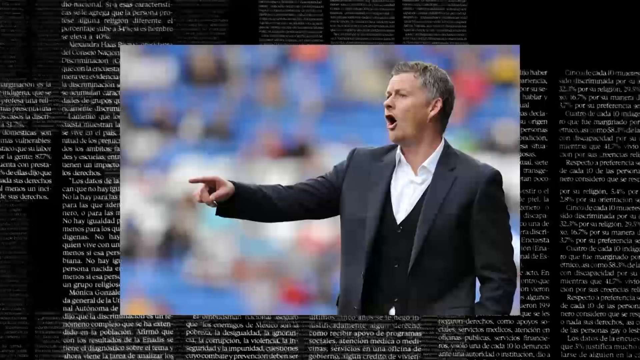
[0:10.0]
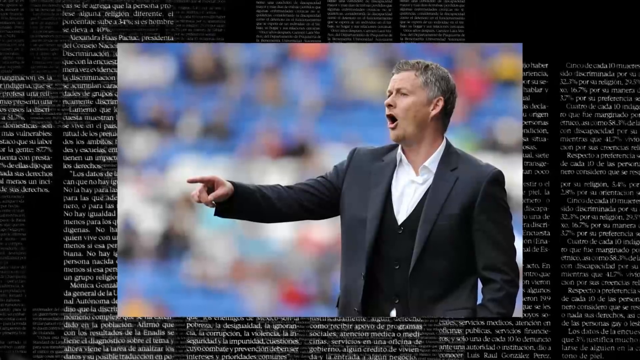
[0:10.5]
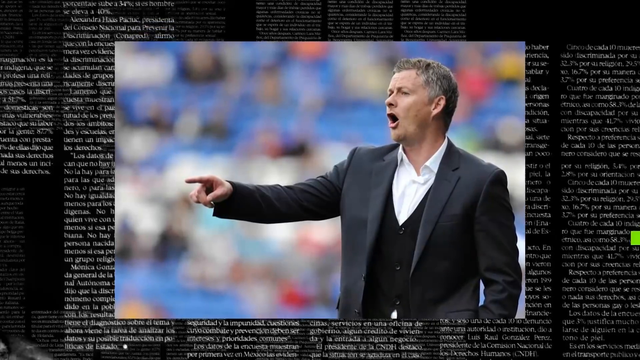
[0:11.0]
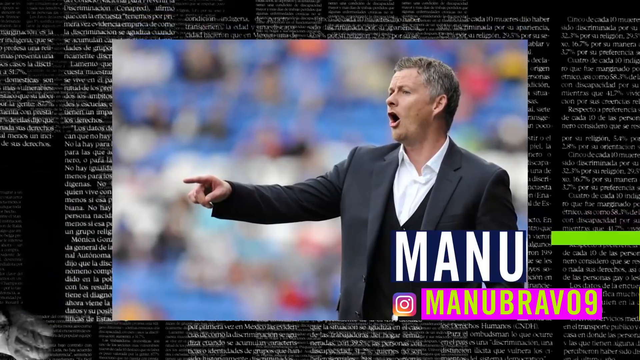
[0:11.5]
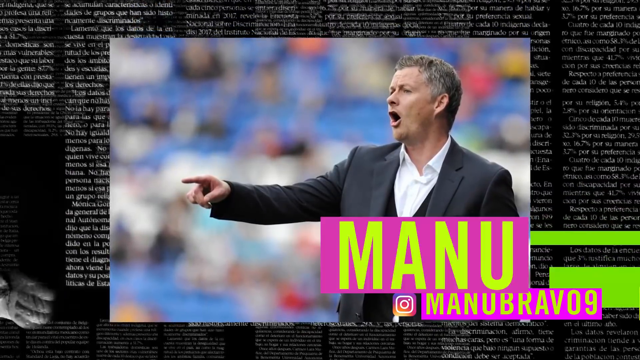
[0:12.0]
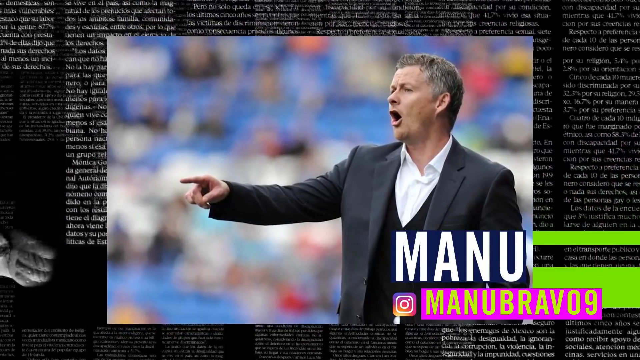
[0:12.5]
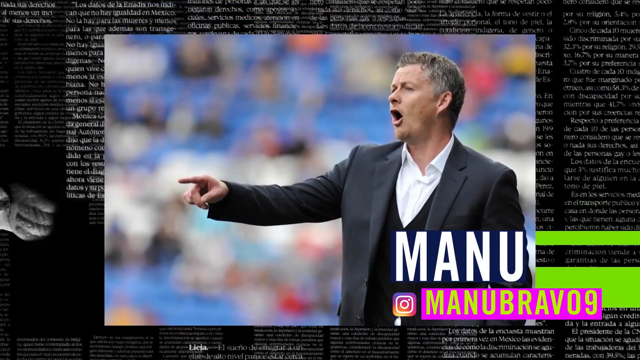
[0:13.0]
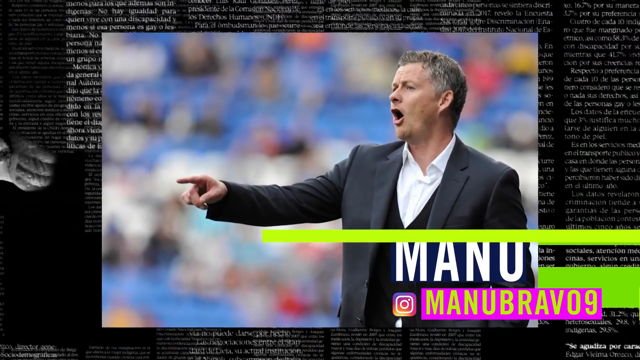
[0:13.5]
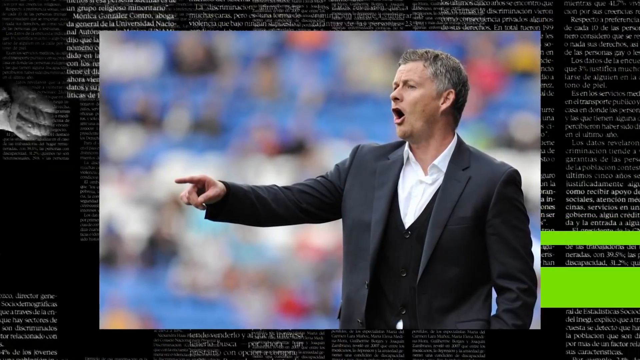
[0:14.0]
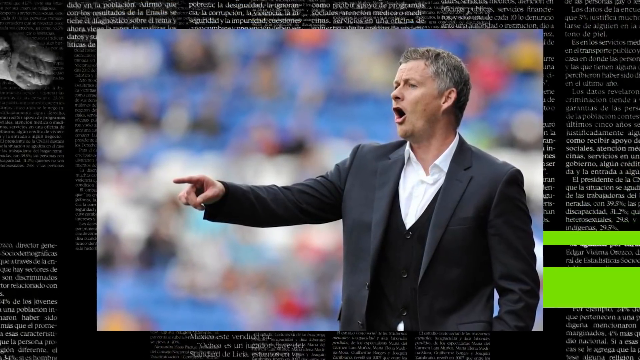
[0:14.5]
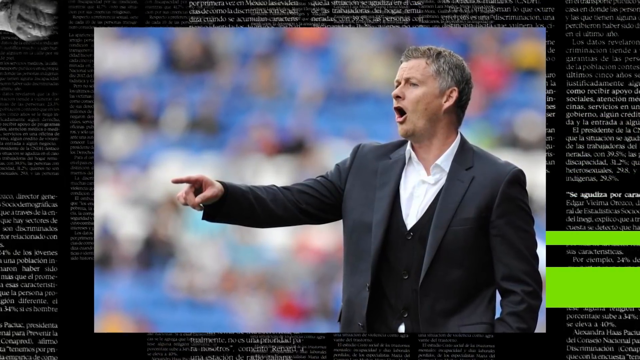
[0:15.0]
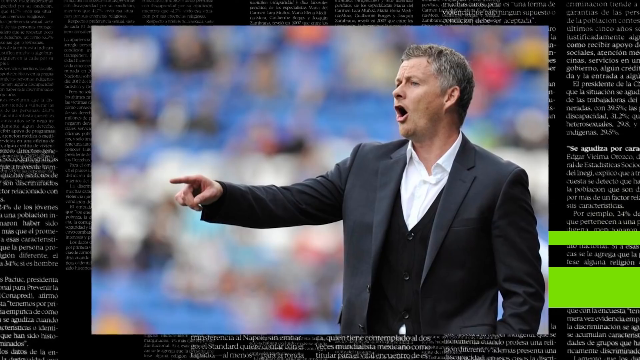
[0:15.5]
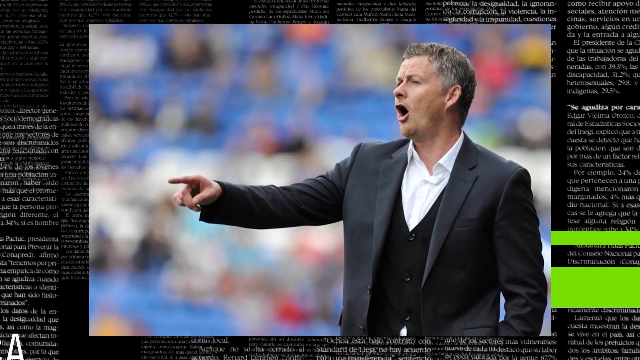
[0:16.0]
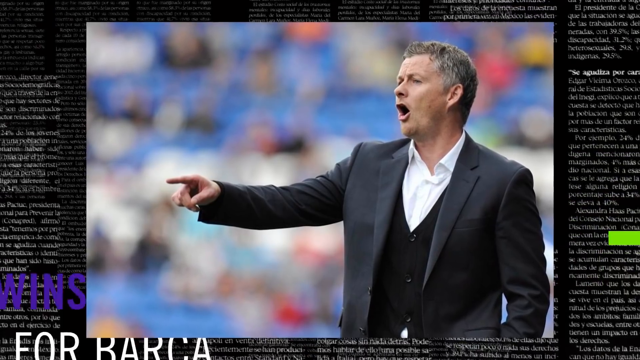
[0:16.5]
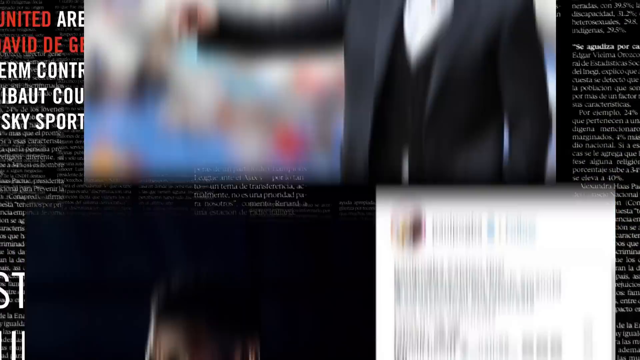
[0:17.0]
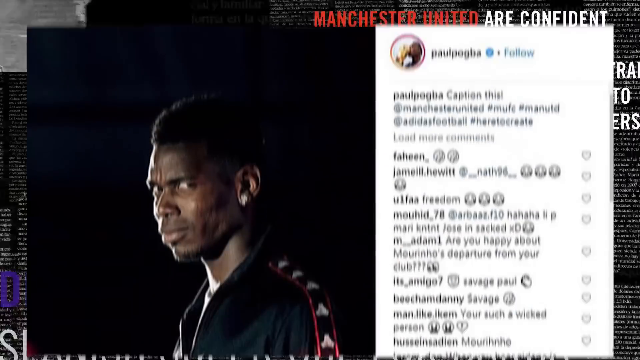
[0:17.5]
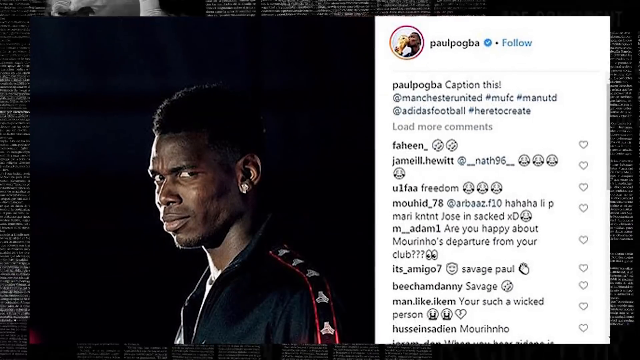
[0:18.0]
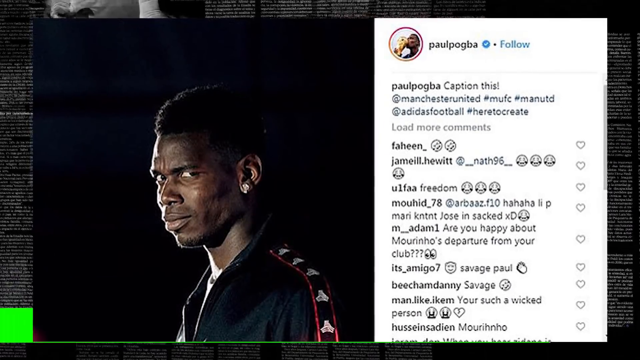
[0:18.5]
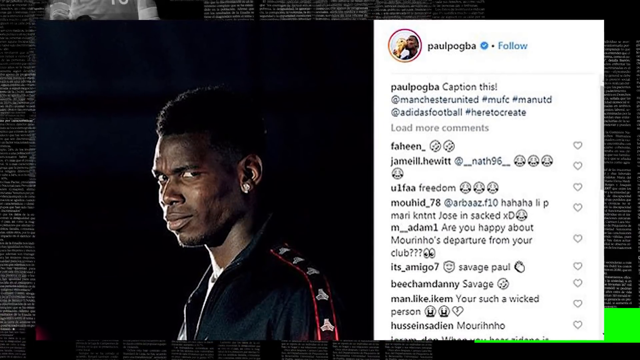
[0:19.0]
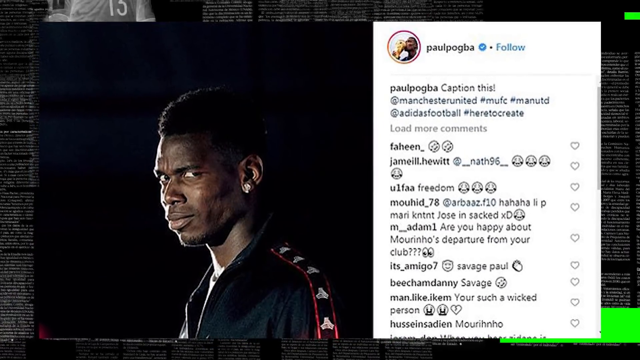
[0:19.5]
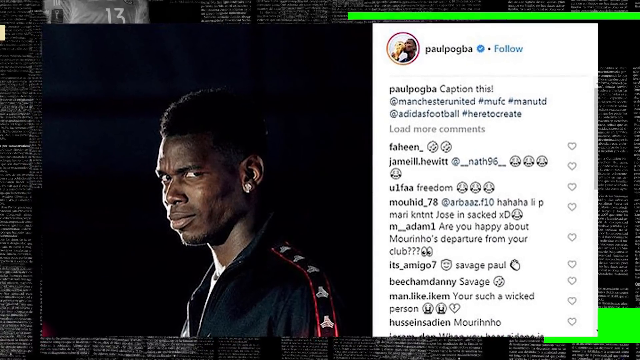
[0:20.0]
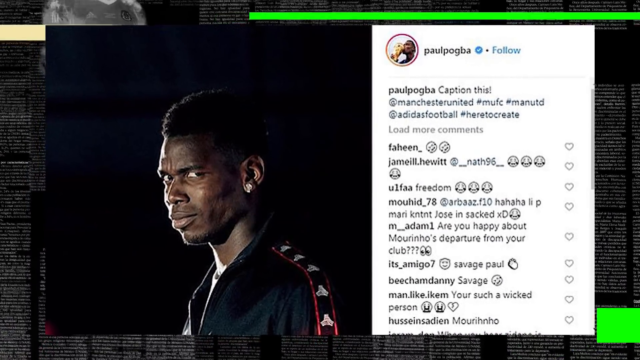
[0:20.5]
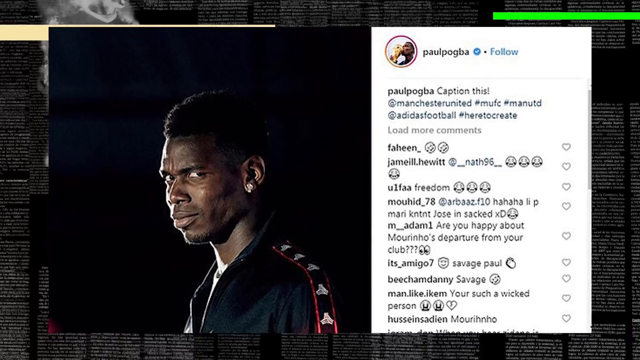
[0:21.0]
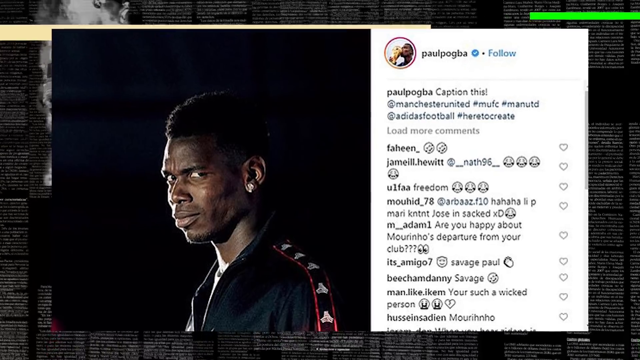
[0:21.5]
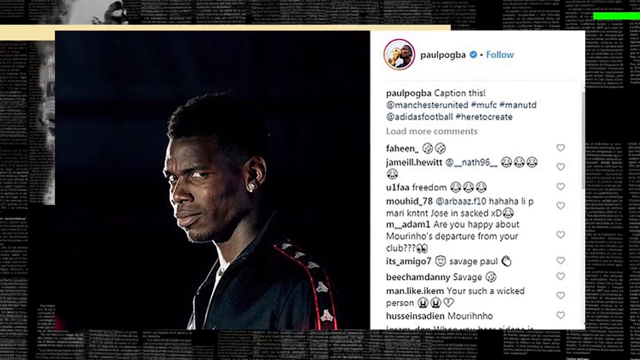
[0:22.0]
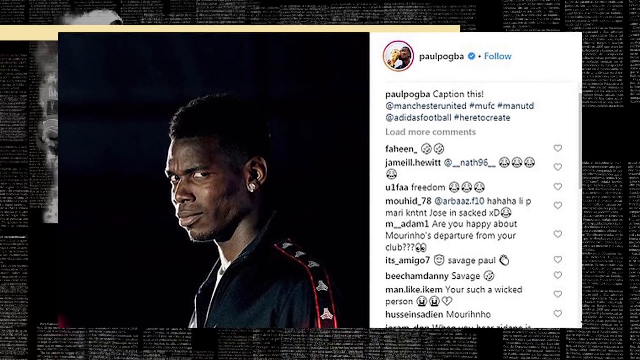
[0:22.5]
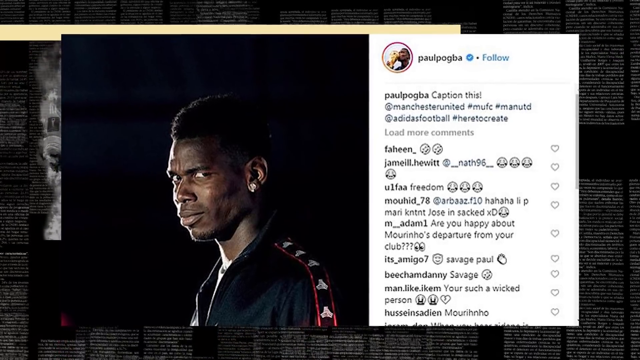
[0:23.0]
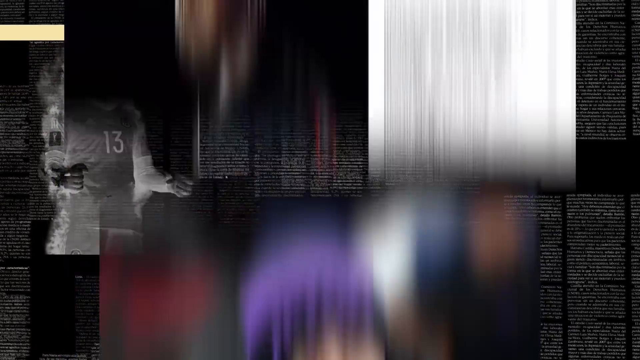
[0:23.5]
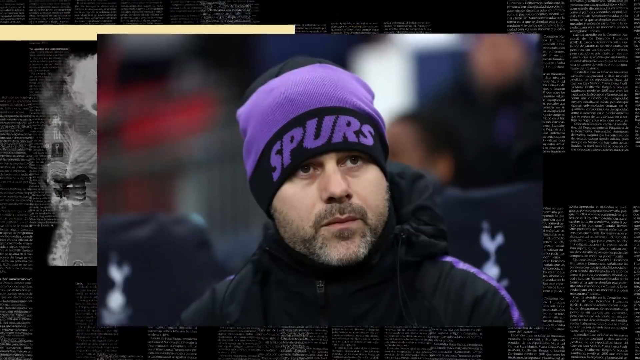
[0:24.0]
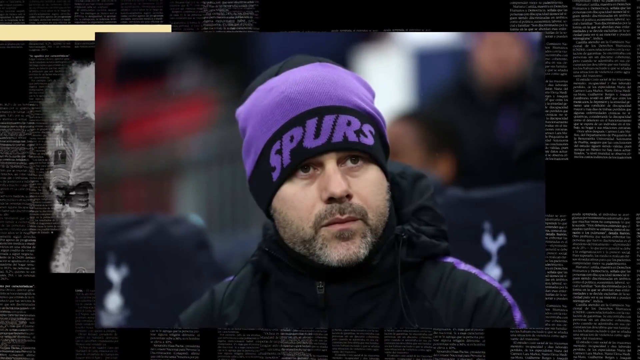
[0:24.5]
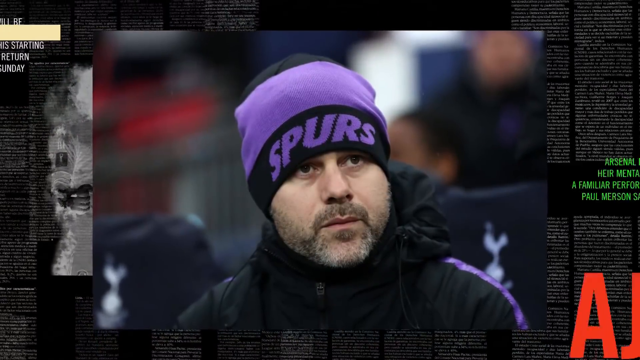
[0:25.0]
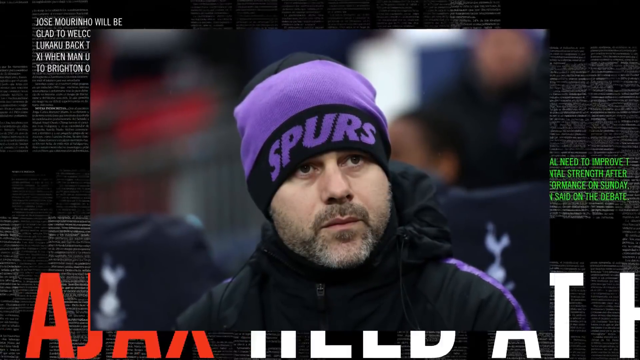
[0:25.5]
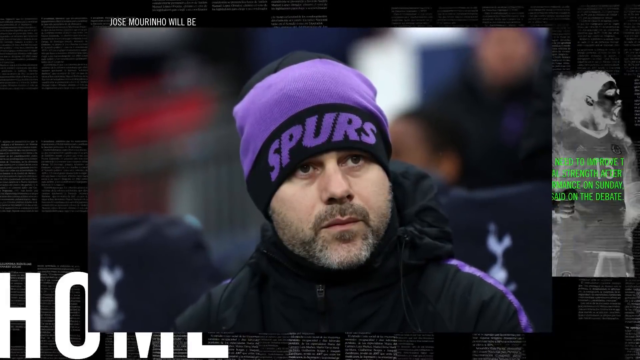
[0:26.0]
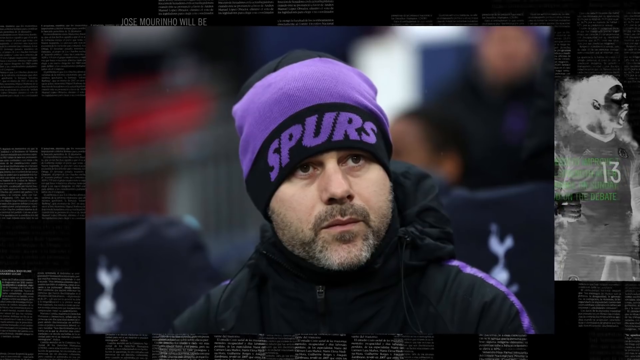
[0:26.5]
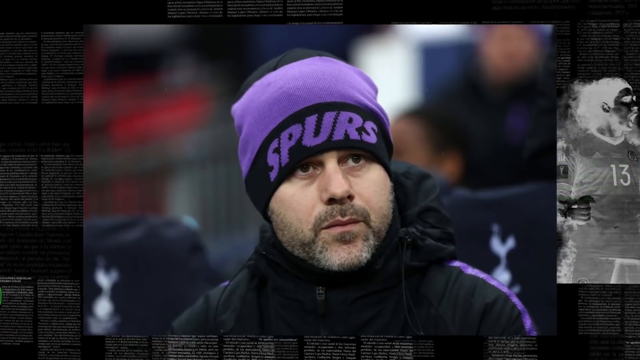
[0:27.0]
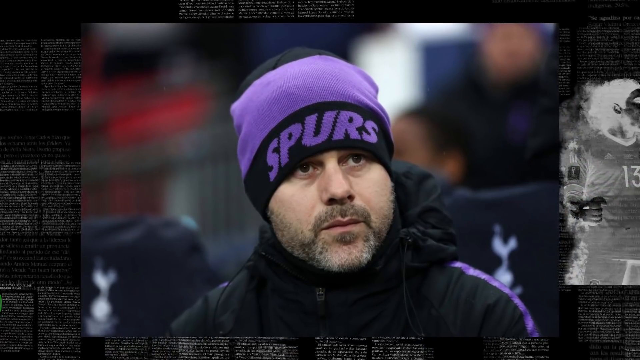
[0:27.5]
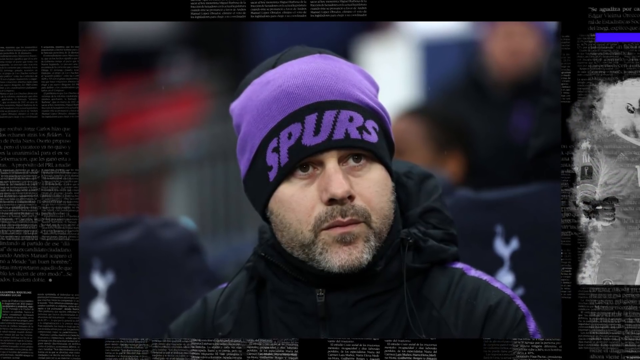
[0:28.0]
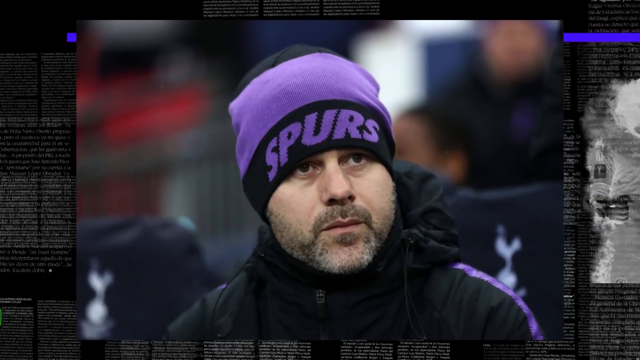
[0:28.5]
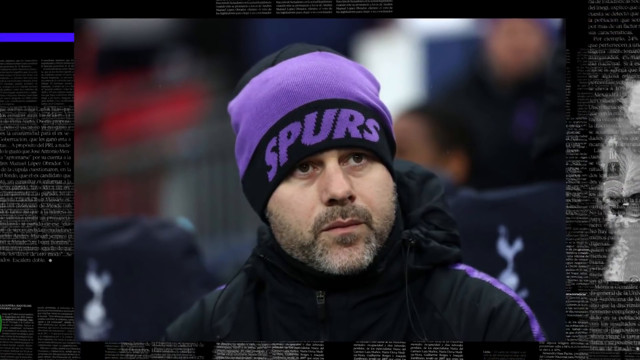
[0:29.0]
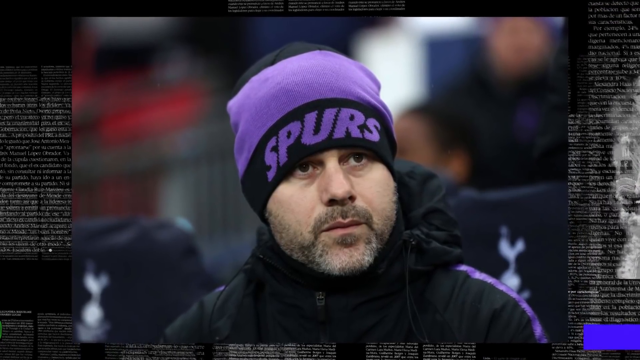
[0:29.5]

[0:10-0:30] An image of a man in a dark gray suit is shown, with a white shirt underneath and a black vest over the shirt and under the suit. He points outward with a finger of his right hand. Popping up underneath him is what is probably a name, "Manu", and below that, on a pink background in all-caps yellow lettering, "MANUBRAVO 9". There is a close-up of him. Next comes an image of an African-American man, with text in something like a cell phone chat image at the front top reading "Paul Pogba". Below that the text reads "caption this" and "at Master United, #MUFC, #MANUTD", followed by "at Adidas football" and more. Emojis and a sort of text exchange are visible after that, and it continues on. The image gets smaller and another picture is shown: a youngish man in a purple and black knit cap with the word "Spurs" written on it in purple. He has a sort of sparse mustache and beard and wears a black shirt with purple striping along the shoulders.